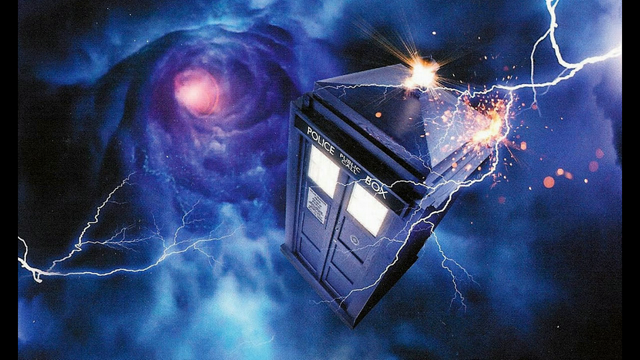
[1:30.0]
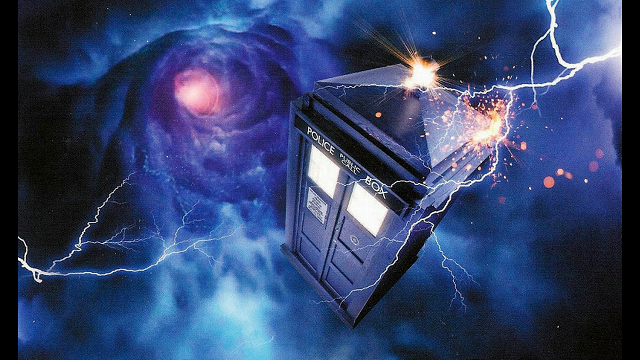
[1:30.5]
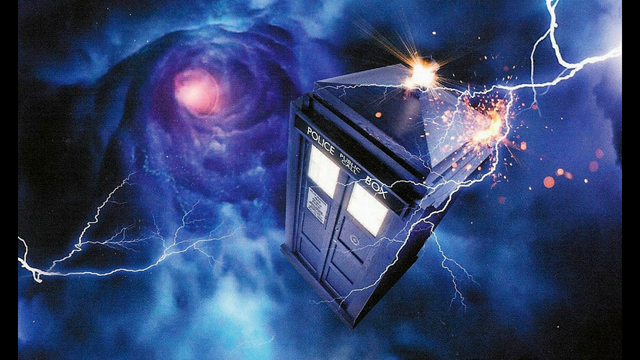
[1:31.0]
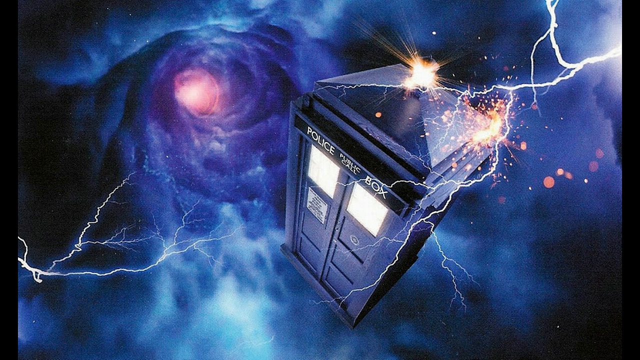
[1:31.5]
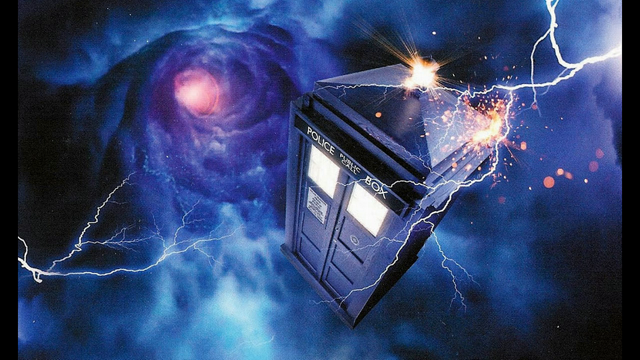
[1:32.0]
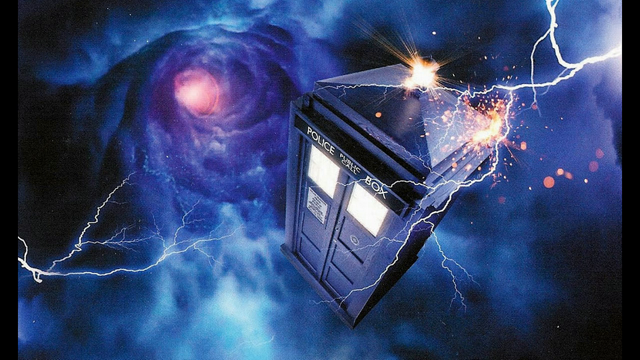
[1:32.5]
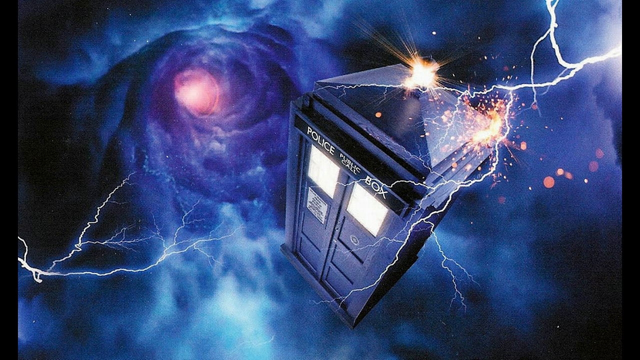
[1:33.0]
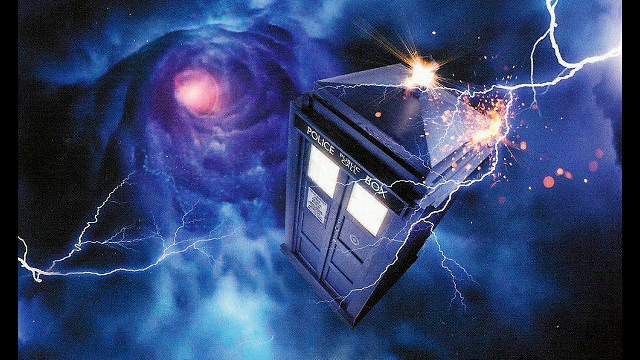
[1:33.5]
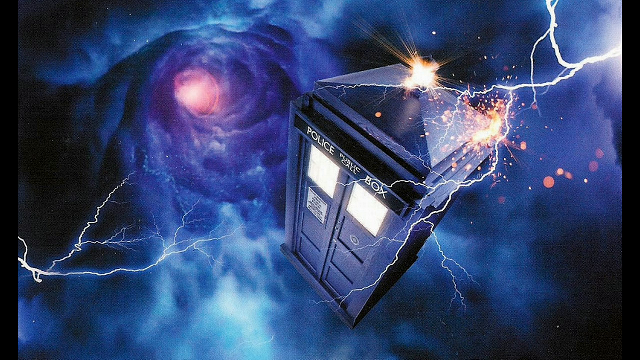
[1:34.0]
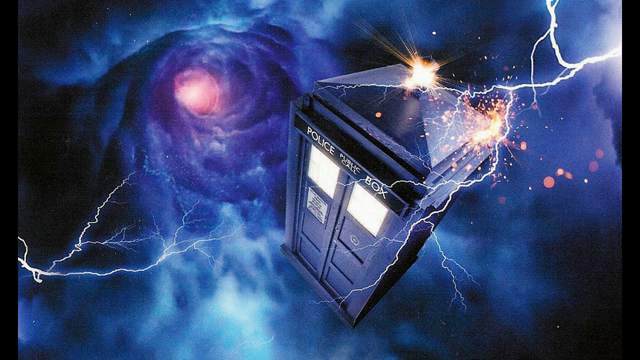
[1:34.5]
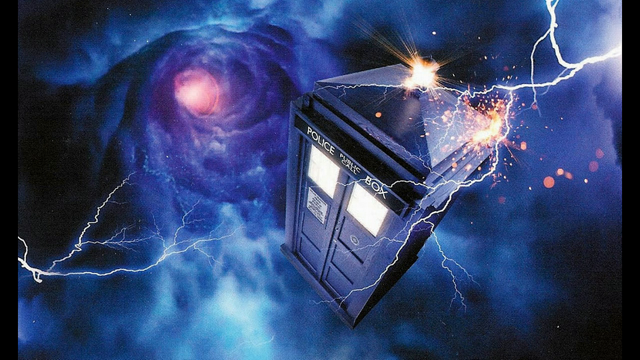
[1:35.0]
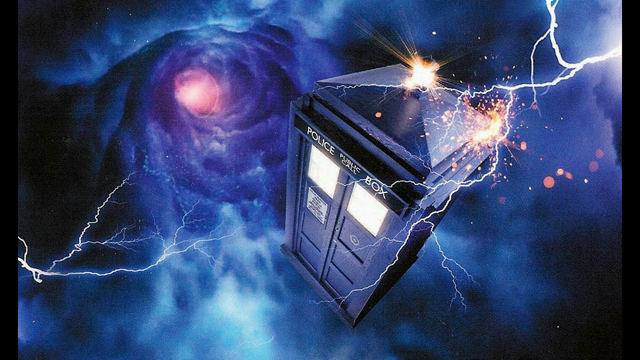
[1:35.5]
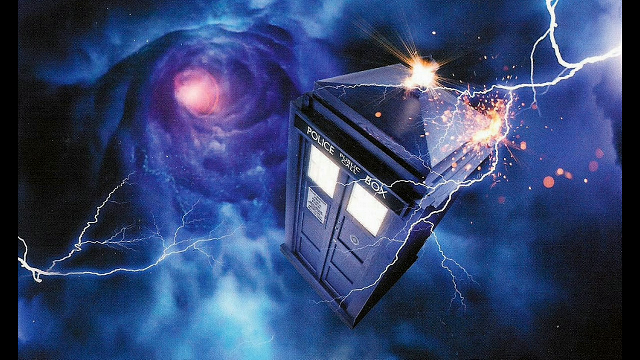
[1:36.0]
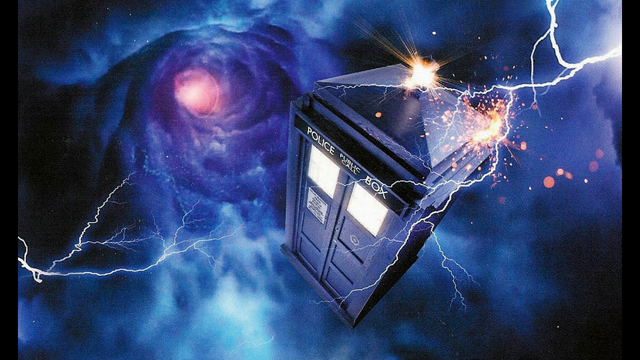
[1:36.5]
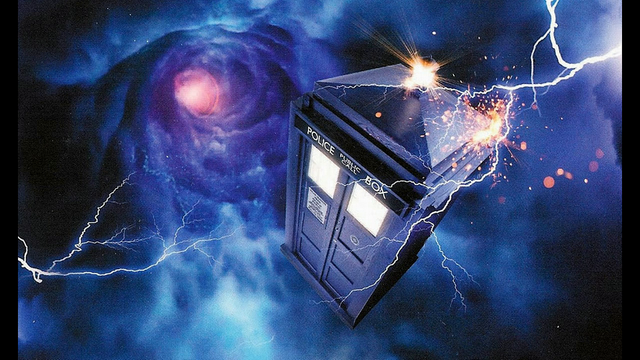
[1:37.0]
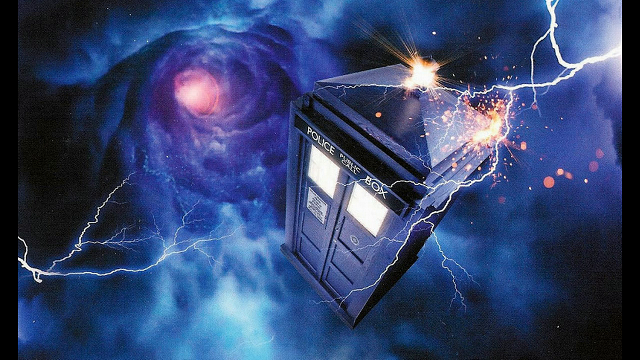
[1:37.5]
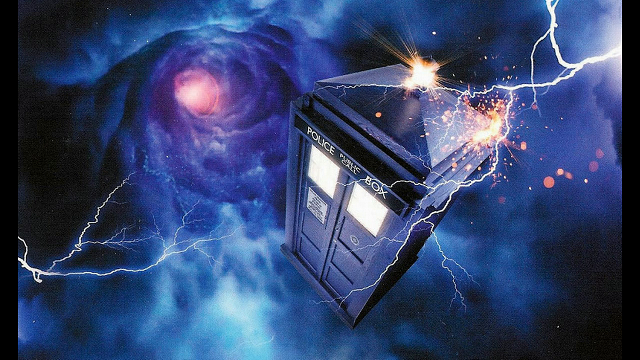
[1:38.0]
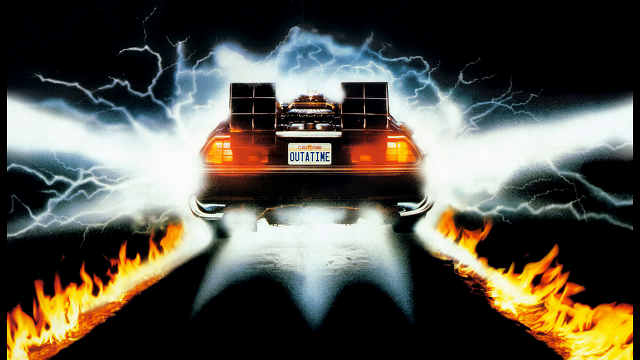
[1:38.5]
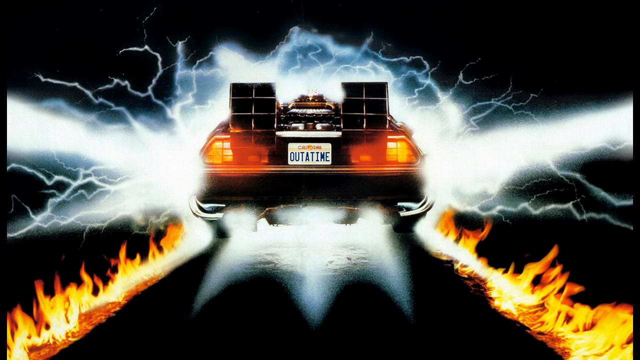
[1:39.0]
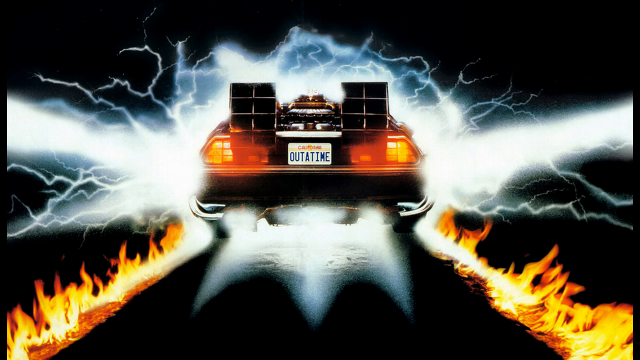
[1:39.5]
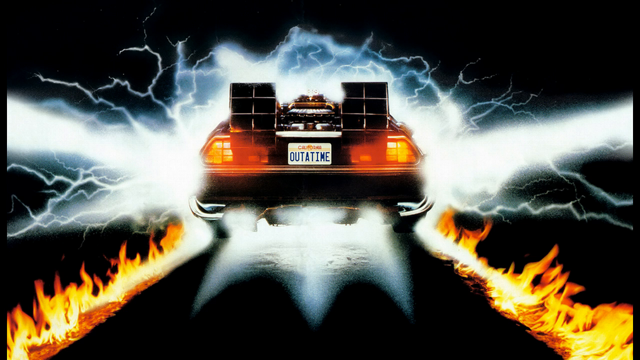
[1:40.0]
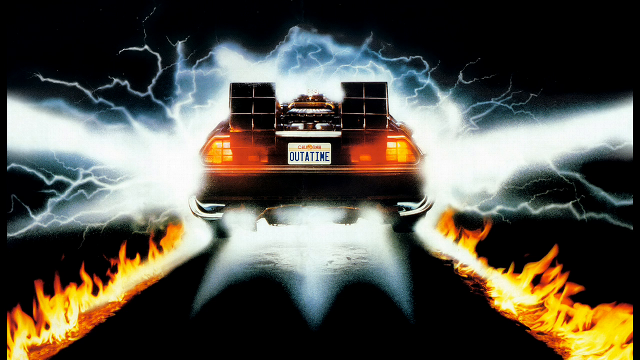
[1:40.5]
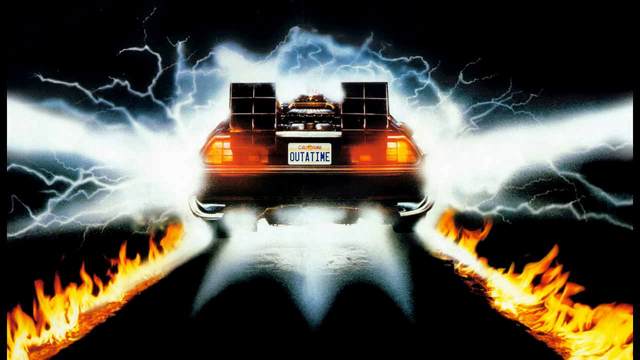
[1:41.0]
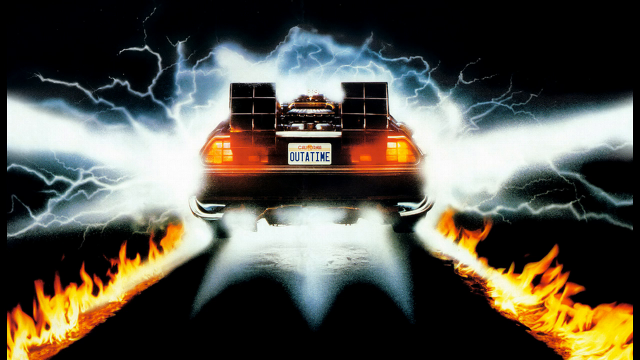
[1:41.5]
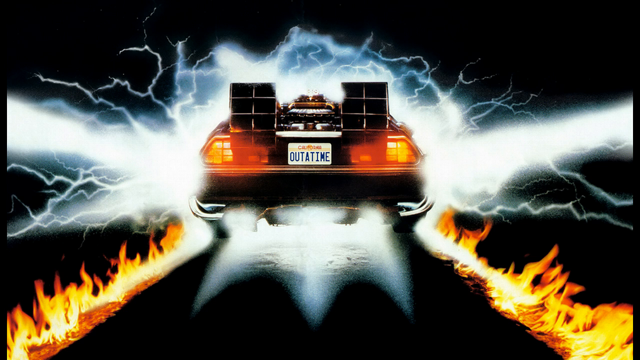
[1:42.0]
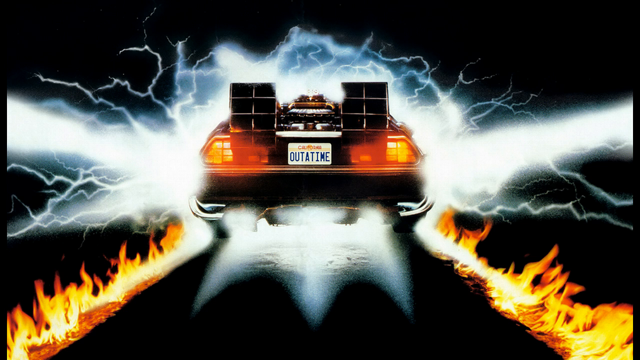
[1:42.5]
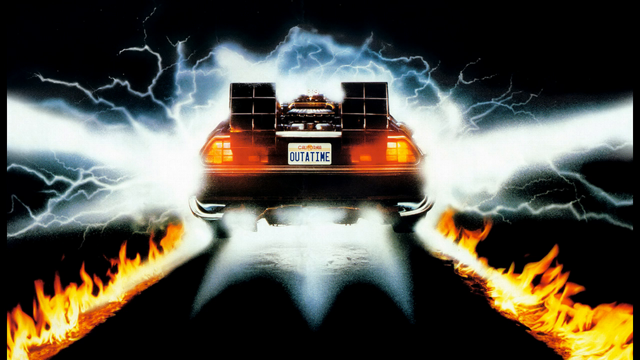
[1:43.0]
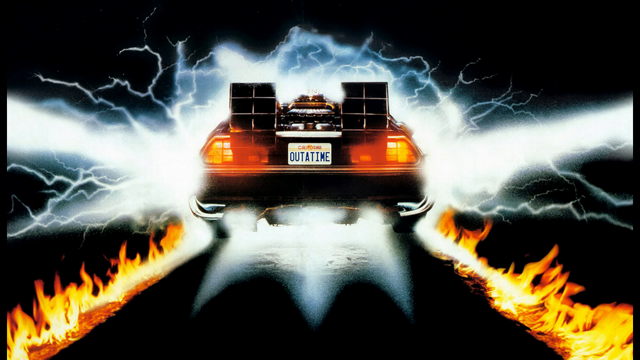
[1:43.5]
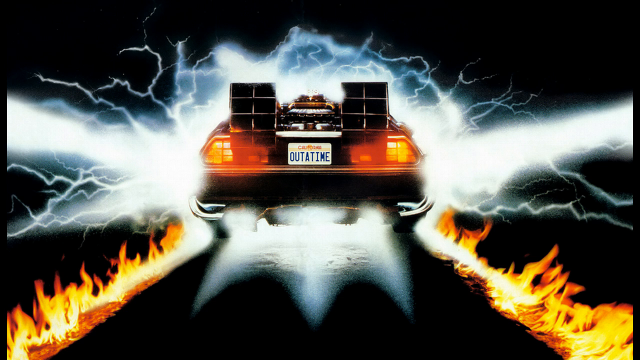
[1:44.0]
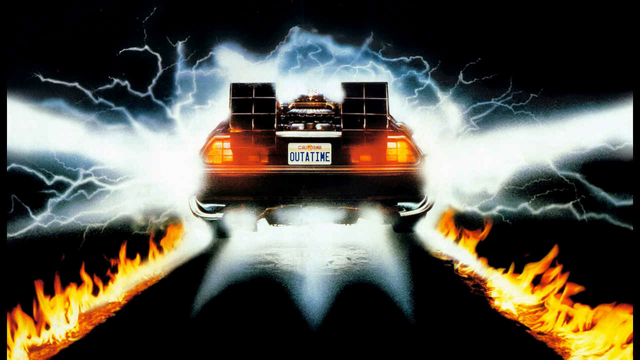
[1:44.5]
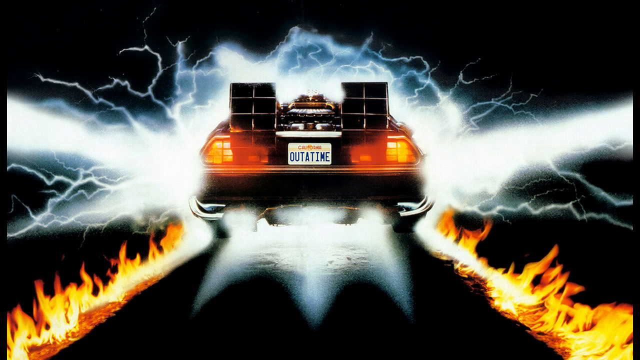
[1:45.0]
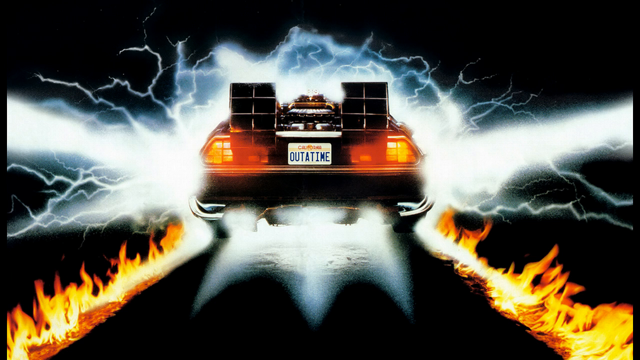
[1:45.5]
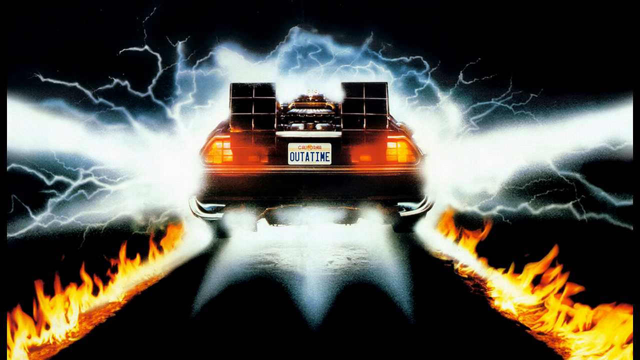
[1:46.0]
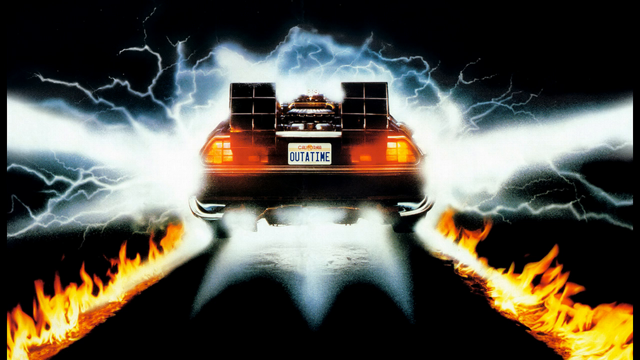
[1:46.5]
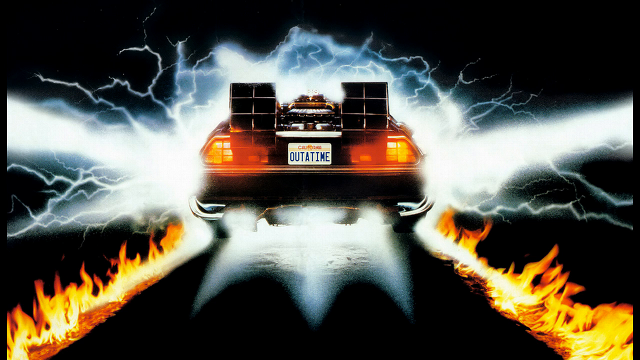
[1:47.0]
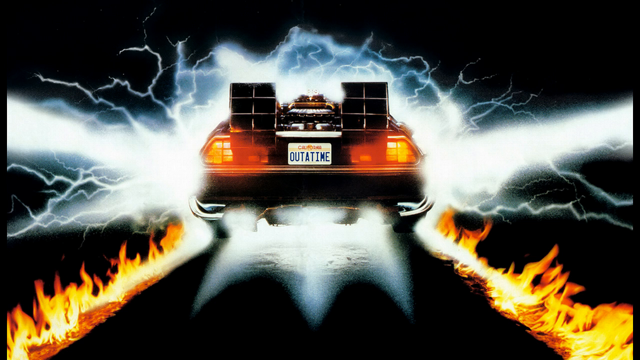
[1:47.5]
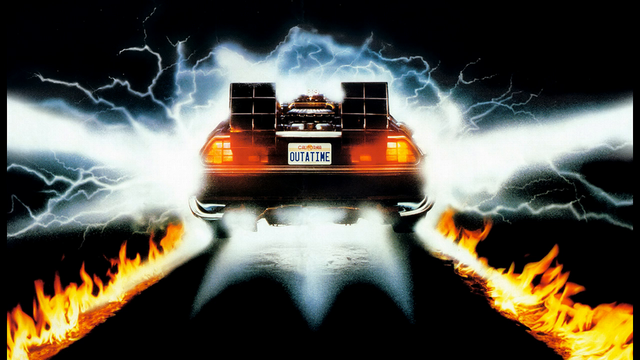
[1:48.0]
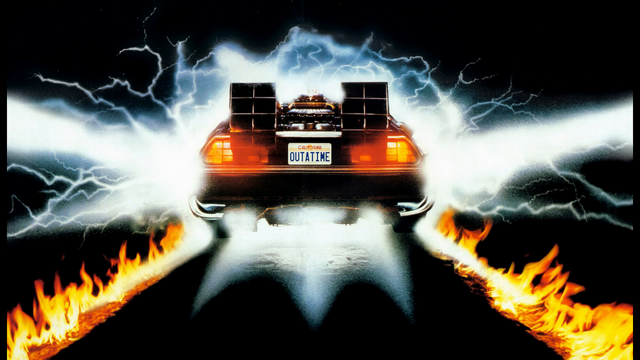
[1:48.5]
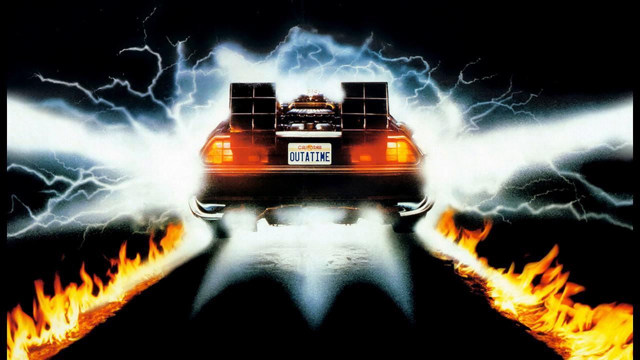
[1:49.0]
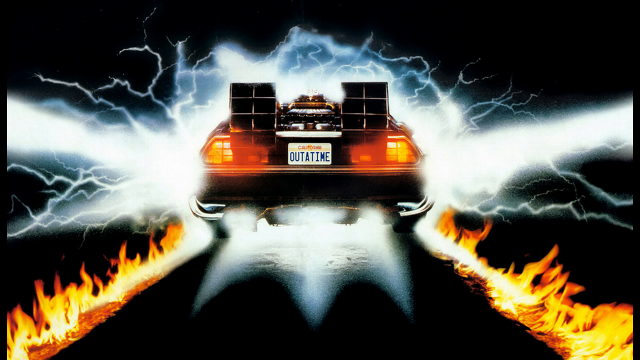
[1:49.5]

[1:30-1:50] The Doctor Who image continues, with lightning striking the police box as it goes through what looks like a black hole. A couple of seconds later, the DeLorean from Back to the Future appears against a black background with lightning sparks, and flame trails come from the car. The license plate says "out of time" and is from California.